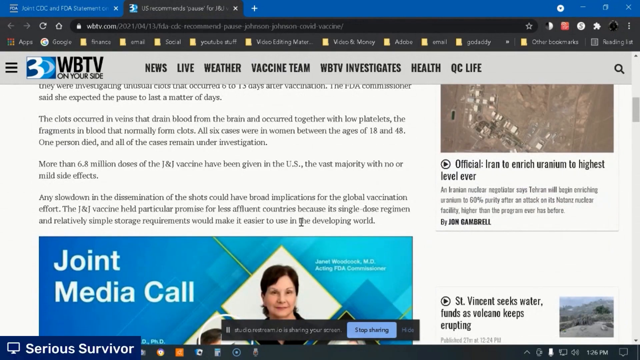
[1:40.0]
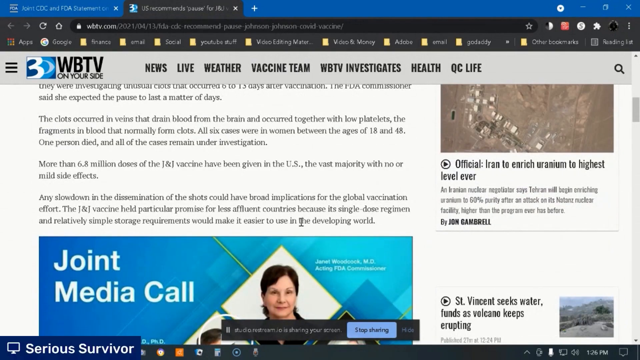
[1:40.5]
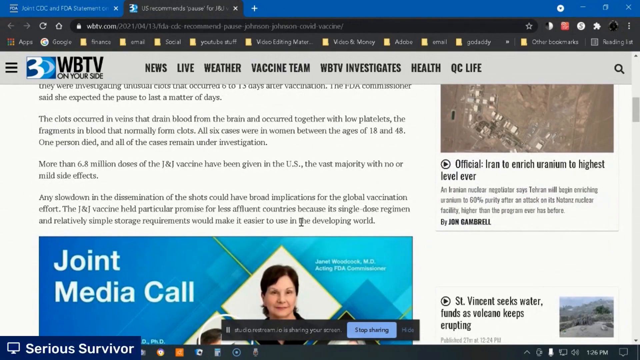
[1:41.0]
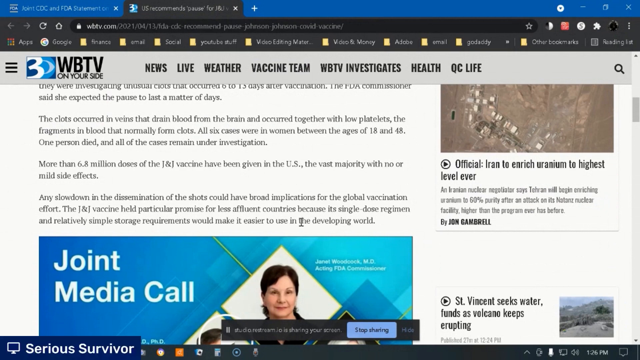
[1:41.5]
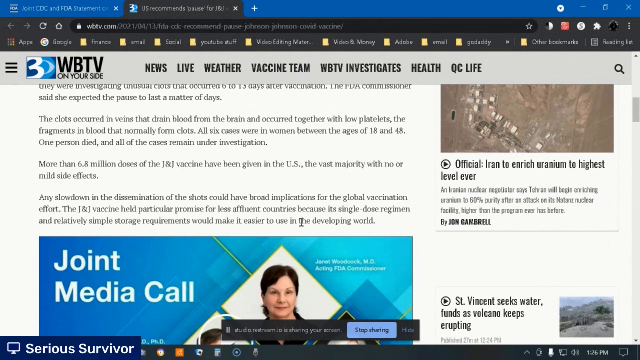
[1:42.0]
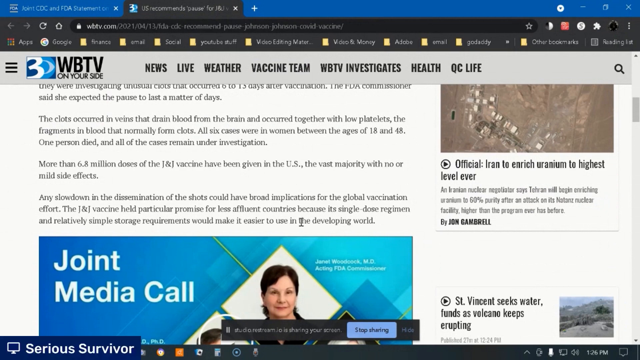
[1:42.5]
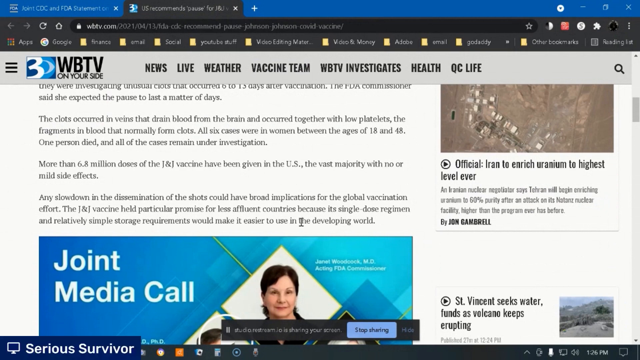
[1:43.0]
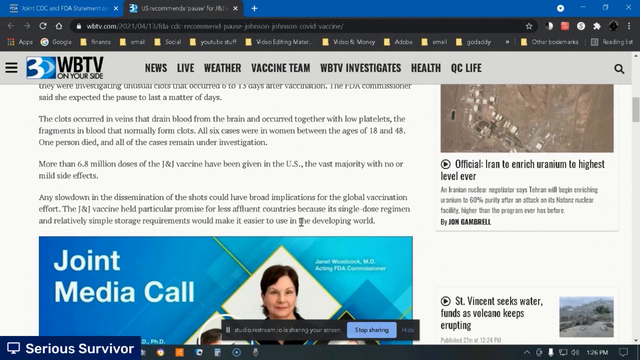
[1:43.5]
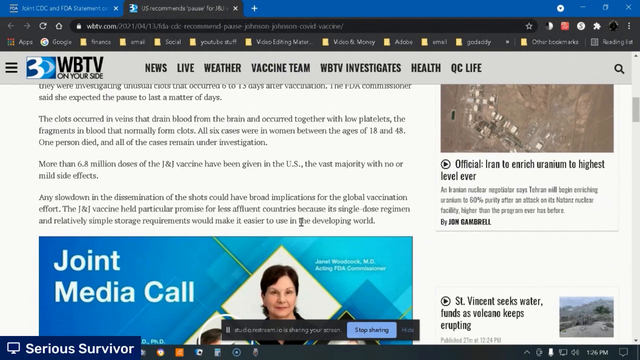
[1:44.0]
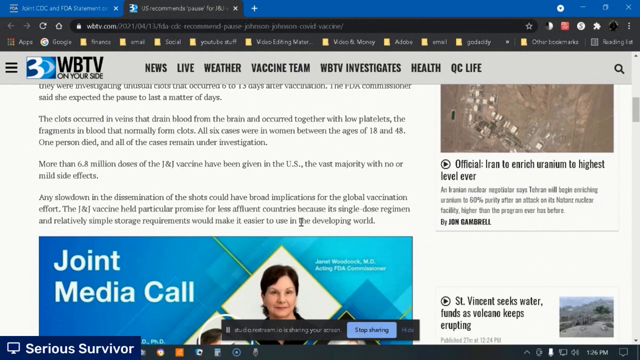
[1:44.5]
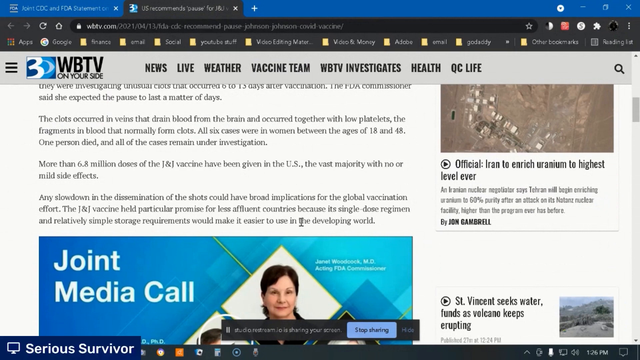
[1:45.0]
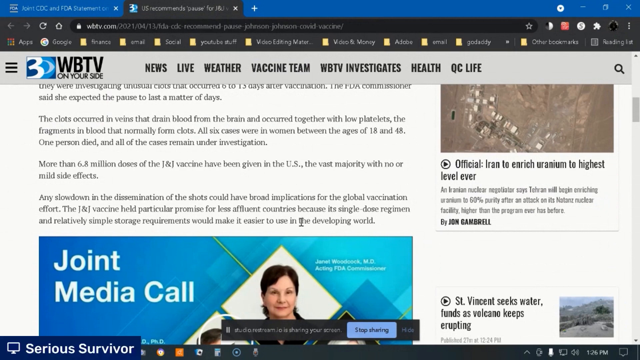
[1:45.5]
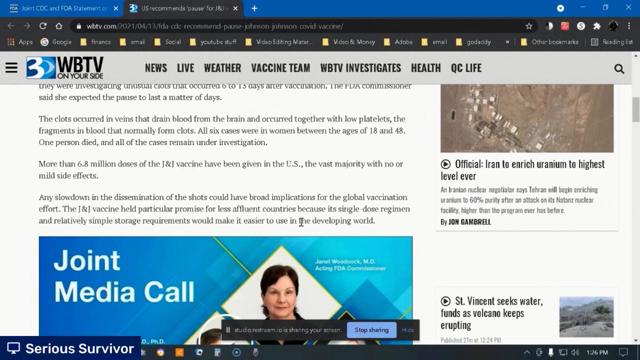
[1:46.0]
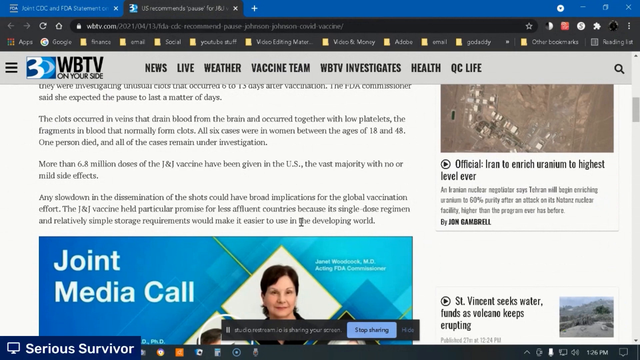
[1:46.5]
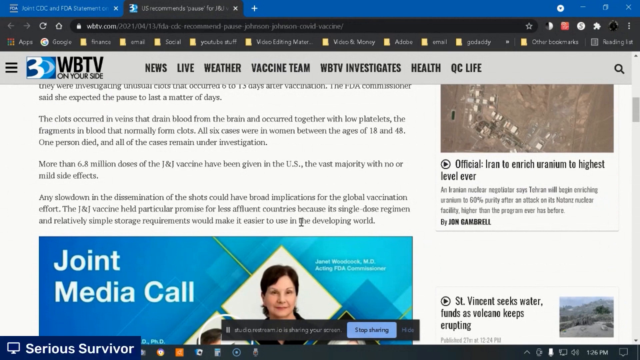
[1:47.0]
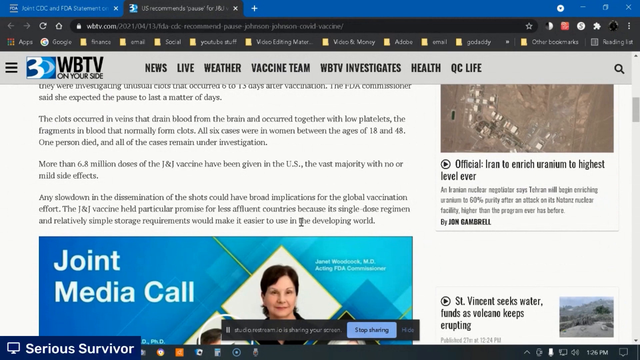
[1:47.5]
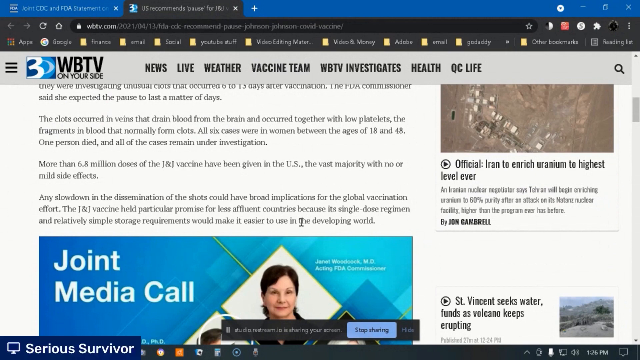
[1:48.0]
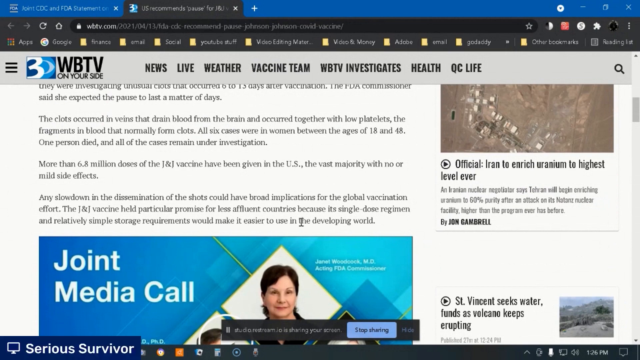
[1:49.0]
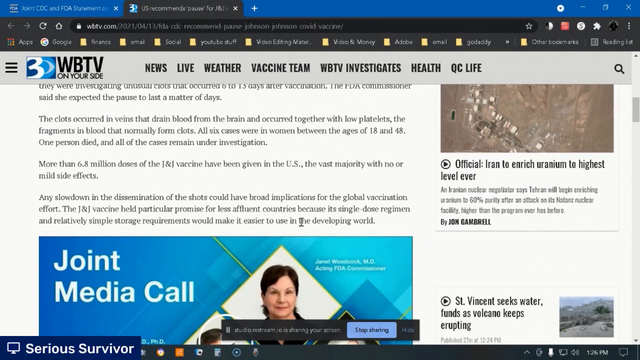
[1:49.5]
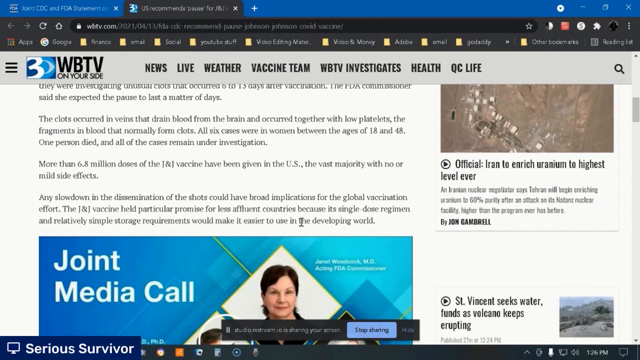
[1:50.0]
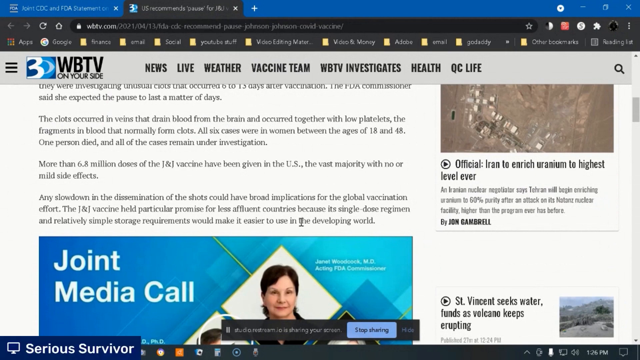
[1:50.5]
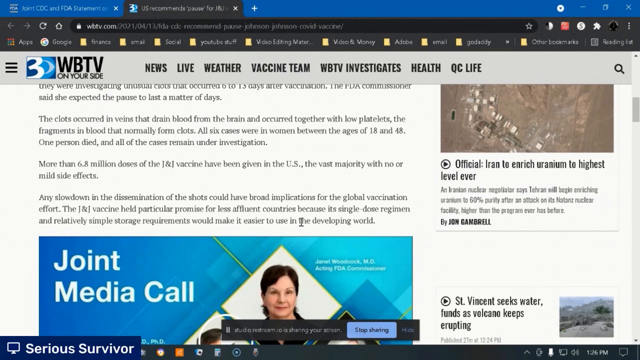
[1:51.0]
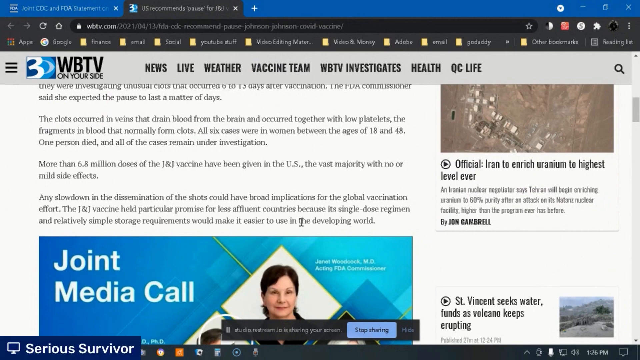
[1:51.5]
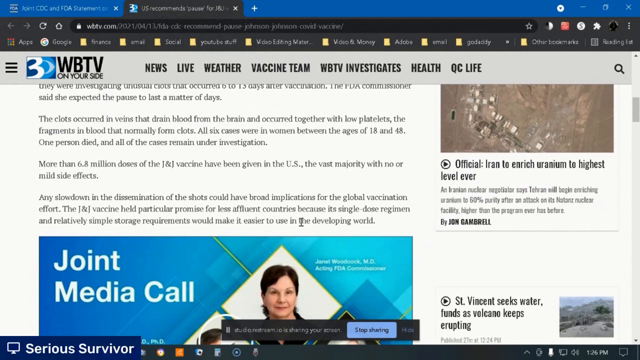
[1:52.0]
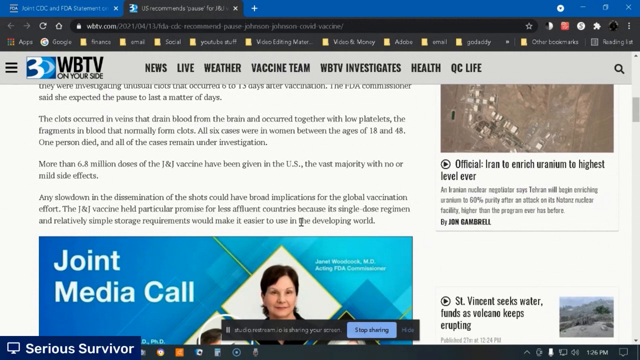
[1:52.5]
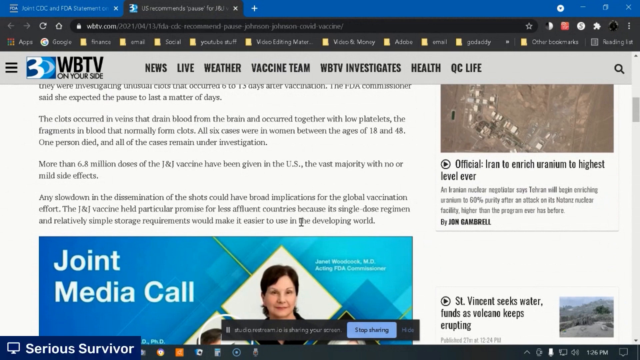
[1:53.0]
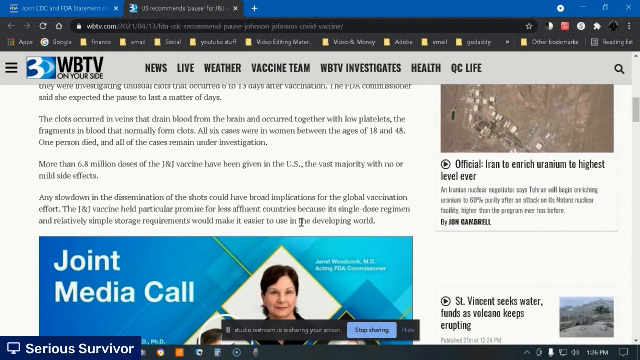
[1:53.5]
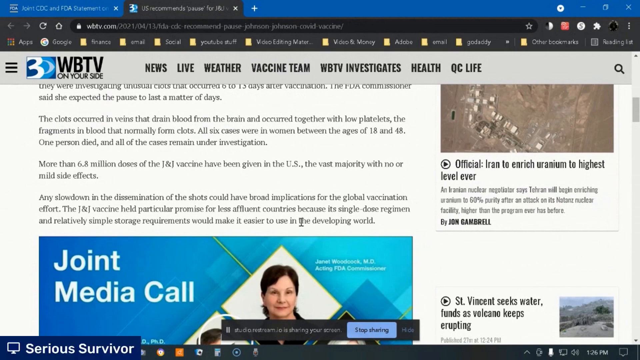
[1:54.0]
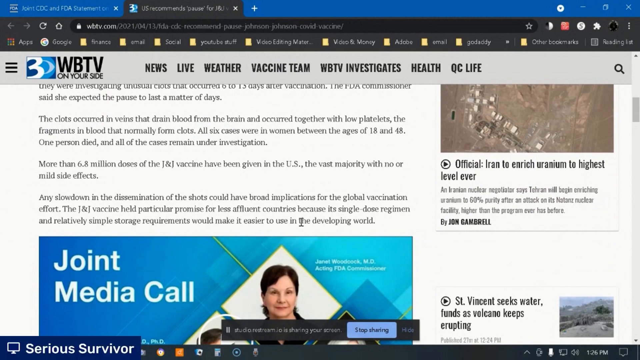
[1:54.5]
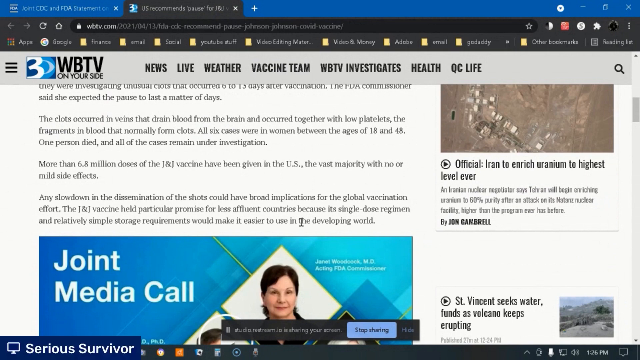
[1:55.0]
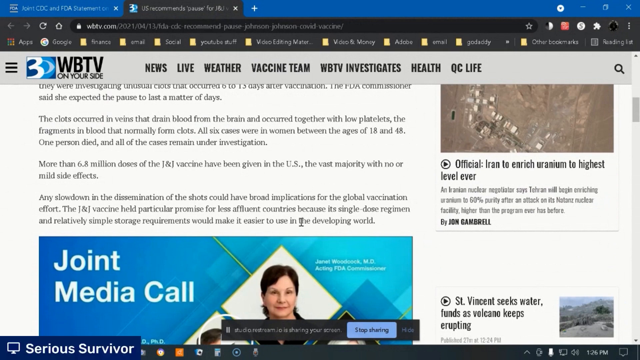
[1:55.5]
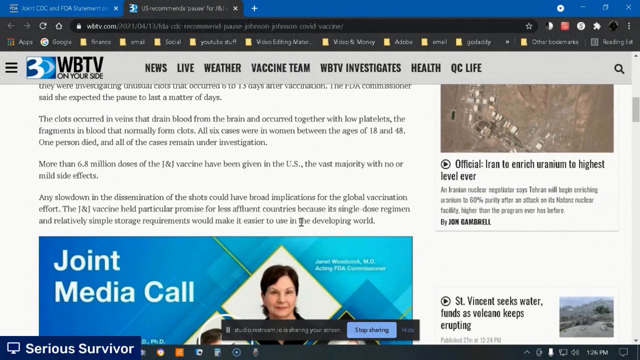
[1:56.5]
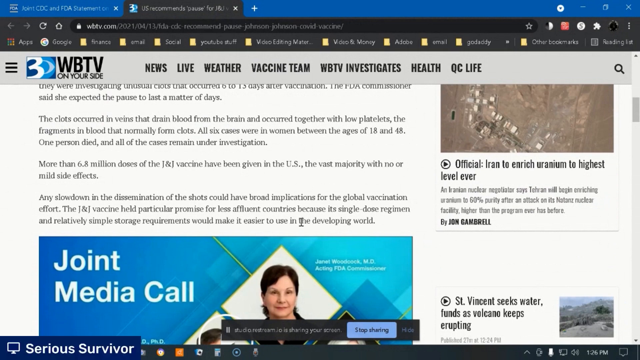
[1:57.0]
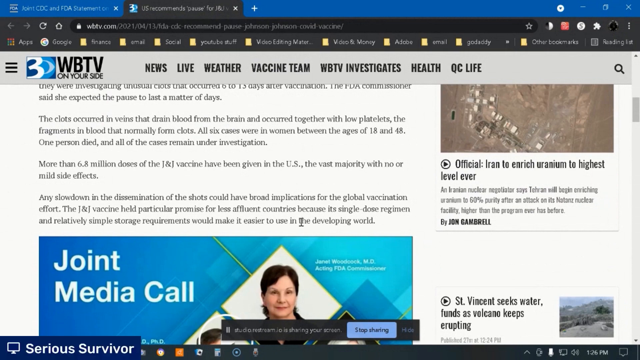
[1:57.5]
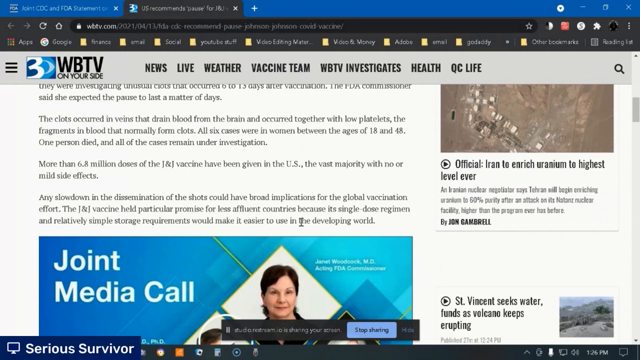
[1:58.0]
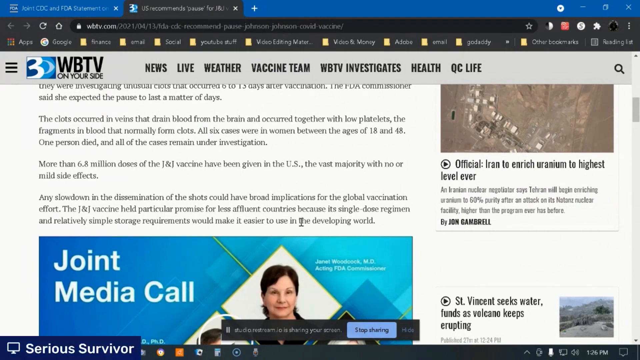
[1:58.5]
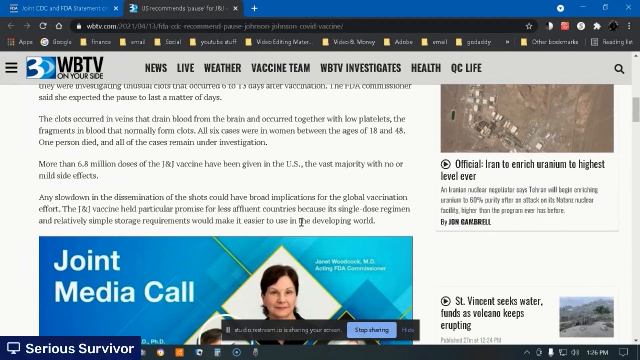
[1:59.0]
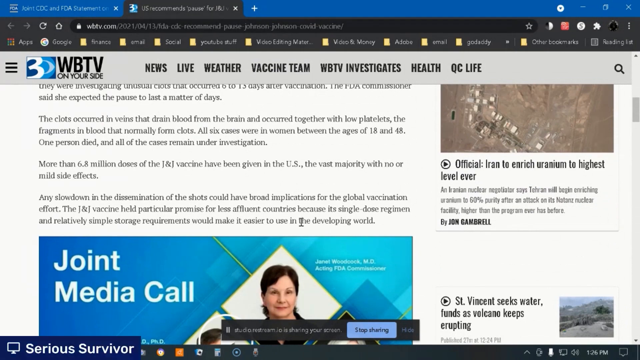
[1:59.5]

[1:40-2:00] The WBTV On Your Side 3 page is on screen, with menu items including "news," "live," "weather," "vaccine team," "WBTV investigates," "health" and "QC life," among many other things to click on. The computer has lots of icons. Lower on the page there is something for a "joint media call," and there are many other articles, including one about a volcano that "keeps erupting." The page does not move at all. Text on it reads "slowdowns in the dissemination of the shots could have brought implications for a global vaccination effort" and says that a "single dose and relatively simple storage requirements would make it easier to use in the developing world." The man stays on this screen.